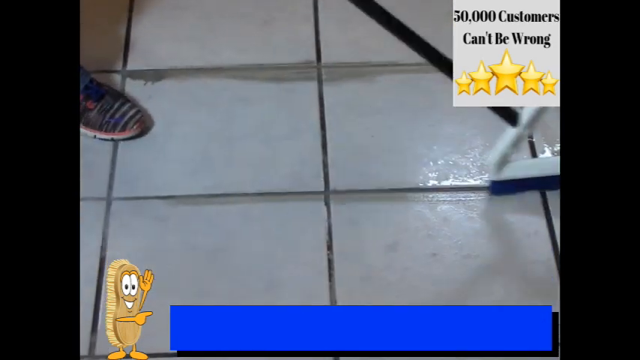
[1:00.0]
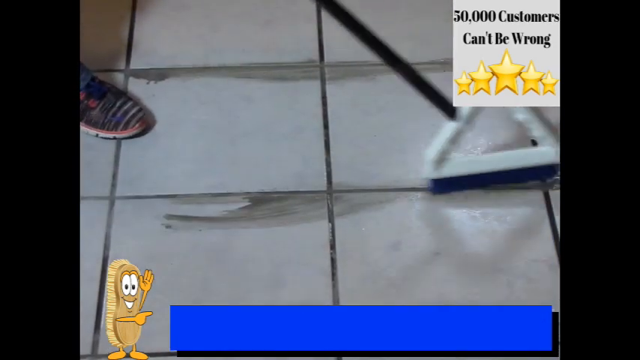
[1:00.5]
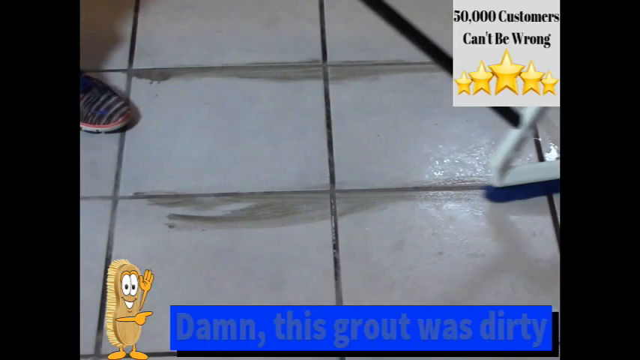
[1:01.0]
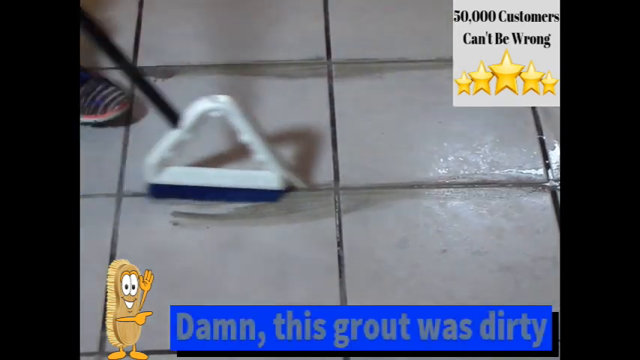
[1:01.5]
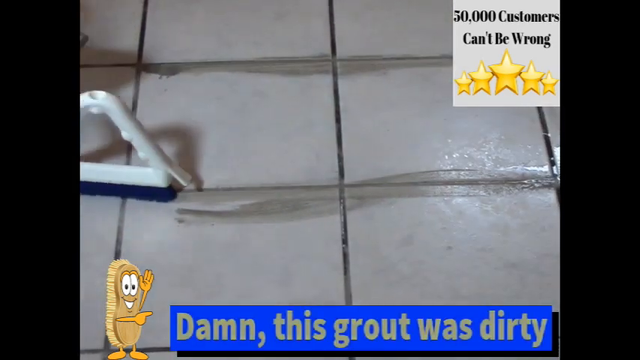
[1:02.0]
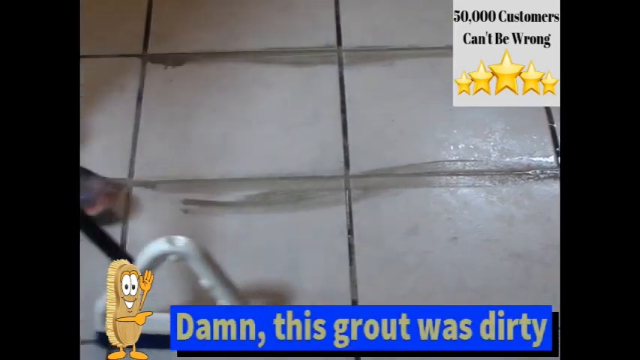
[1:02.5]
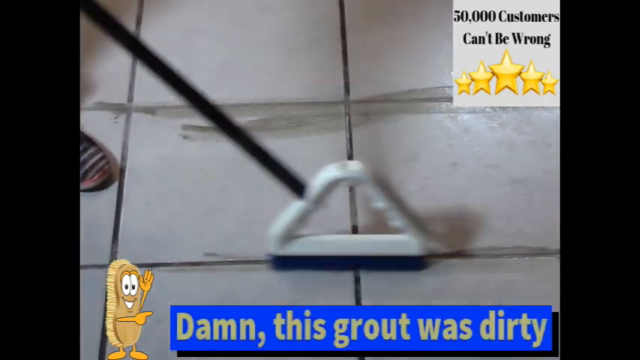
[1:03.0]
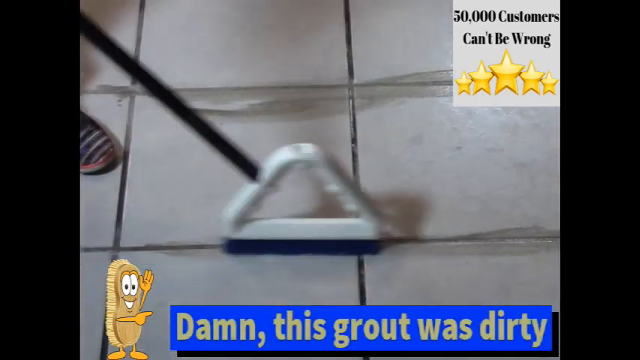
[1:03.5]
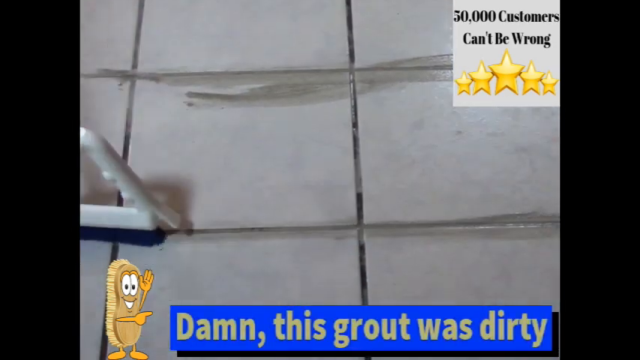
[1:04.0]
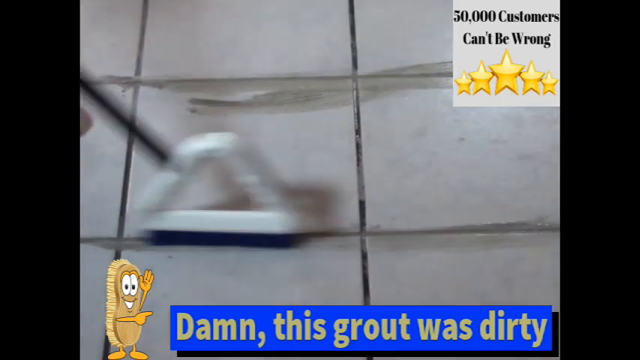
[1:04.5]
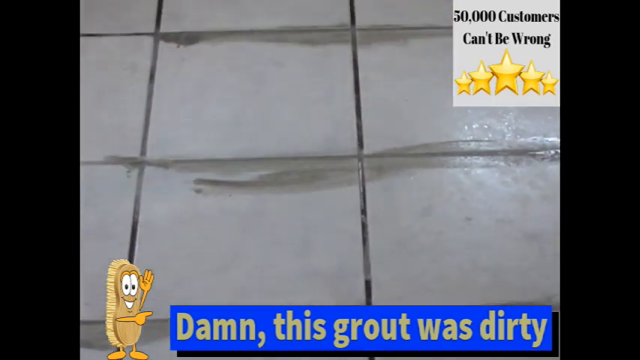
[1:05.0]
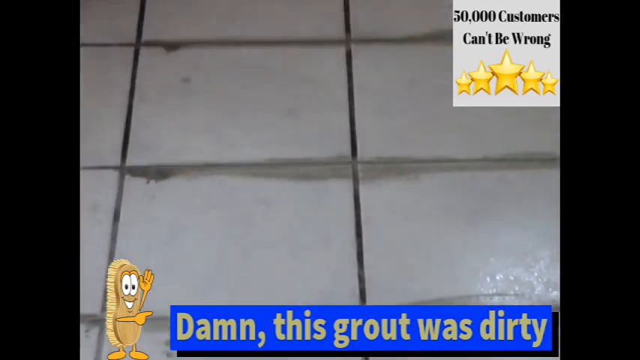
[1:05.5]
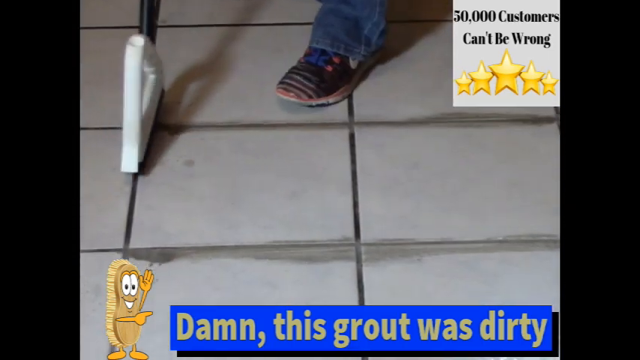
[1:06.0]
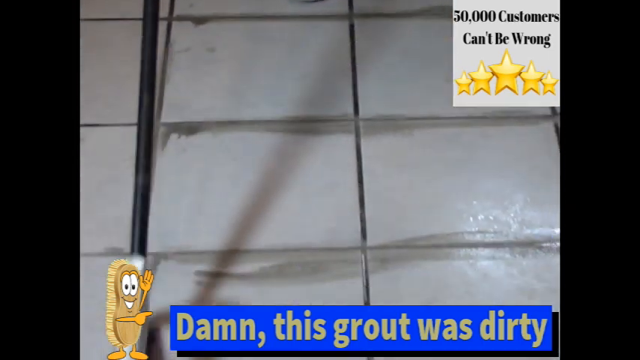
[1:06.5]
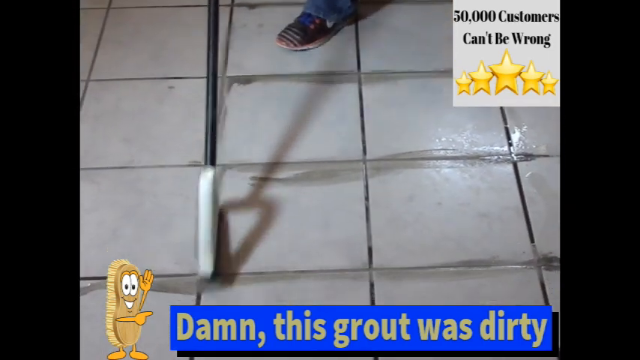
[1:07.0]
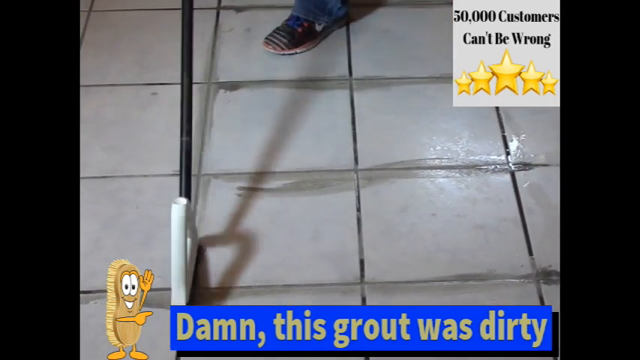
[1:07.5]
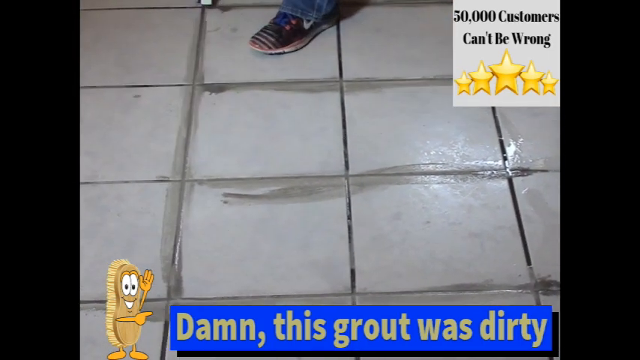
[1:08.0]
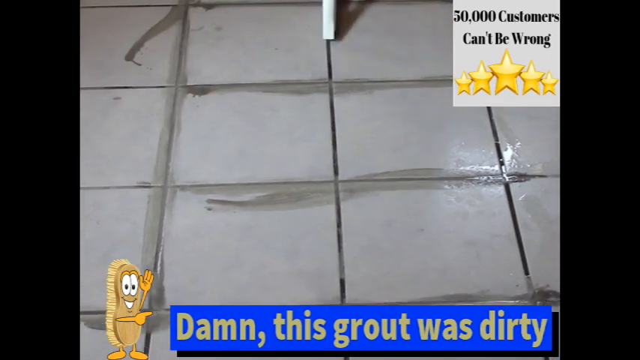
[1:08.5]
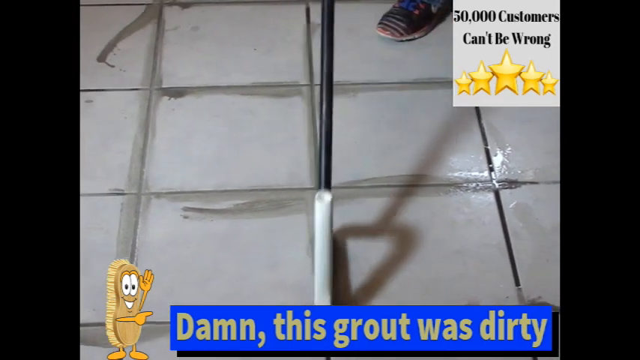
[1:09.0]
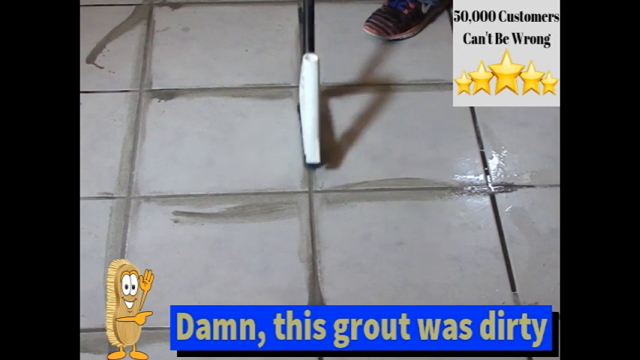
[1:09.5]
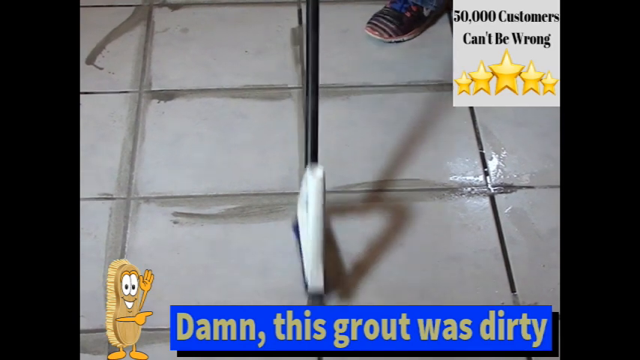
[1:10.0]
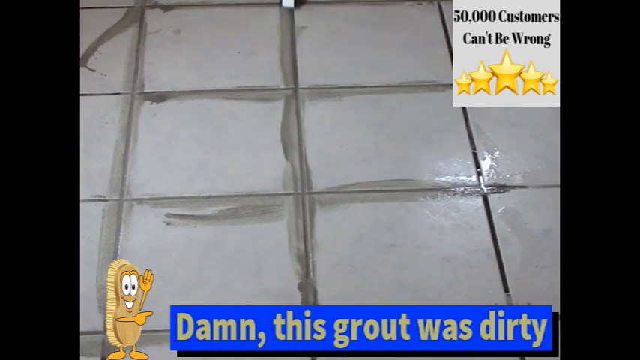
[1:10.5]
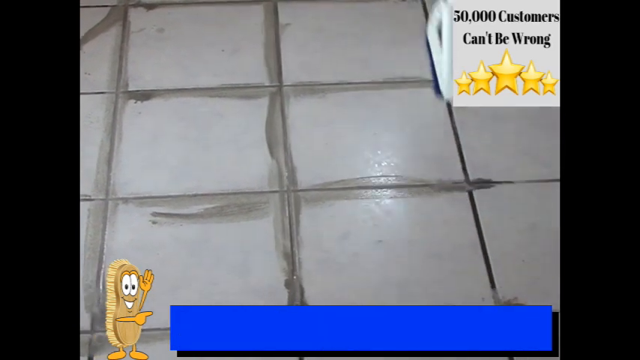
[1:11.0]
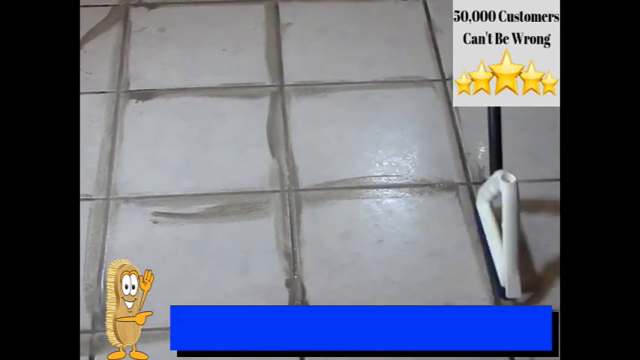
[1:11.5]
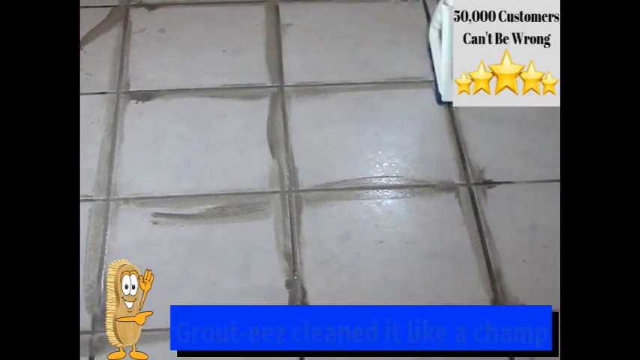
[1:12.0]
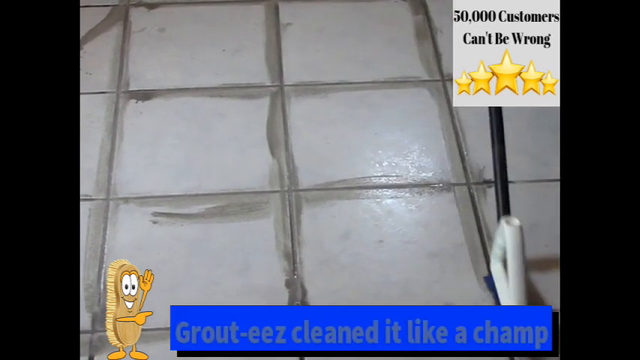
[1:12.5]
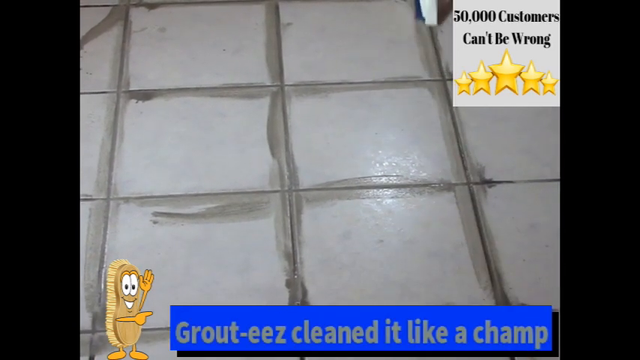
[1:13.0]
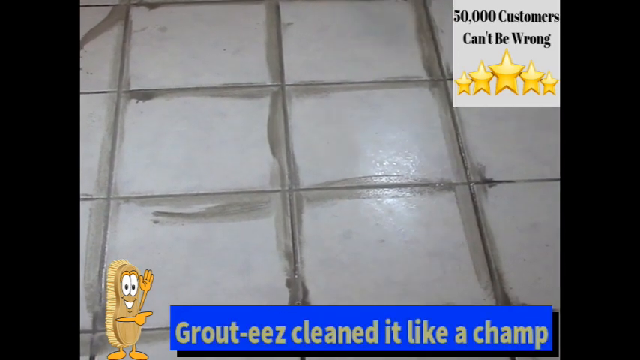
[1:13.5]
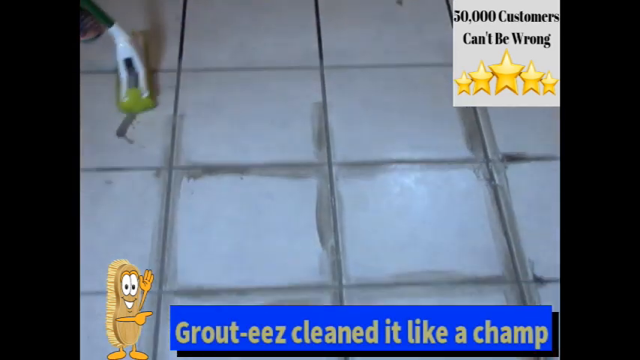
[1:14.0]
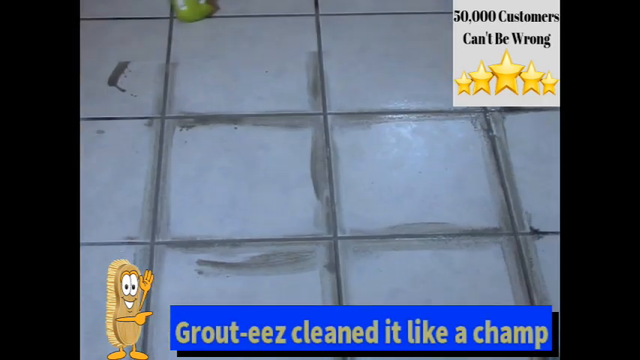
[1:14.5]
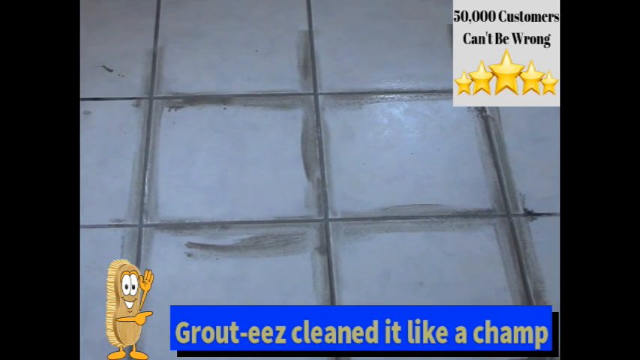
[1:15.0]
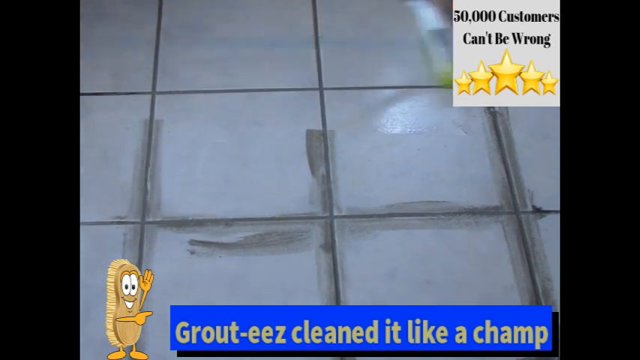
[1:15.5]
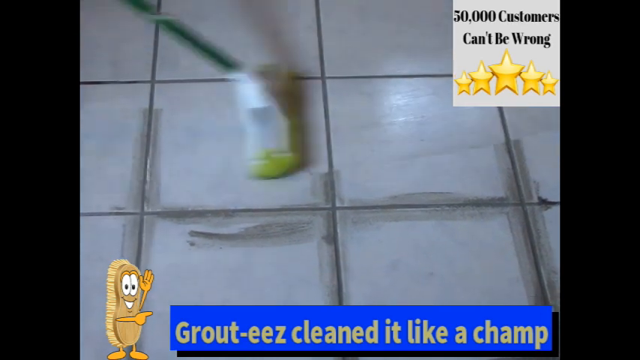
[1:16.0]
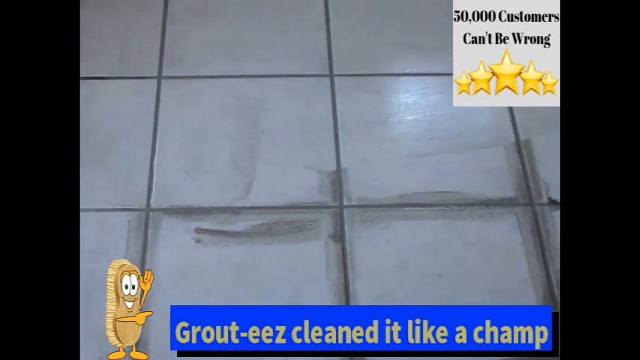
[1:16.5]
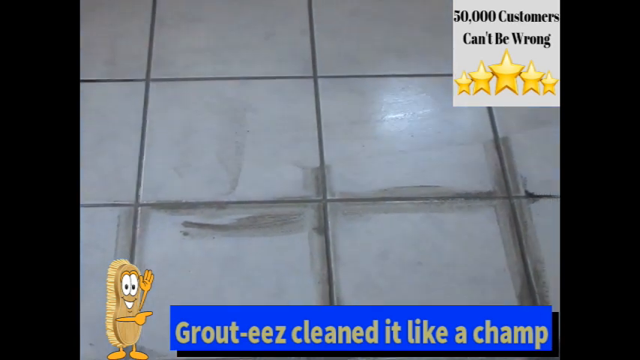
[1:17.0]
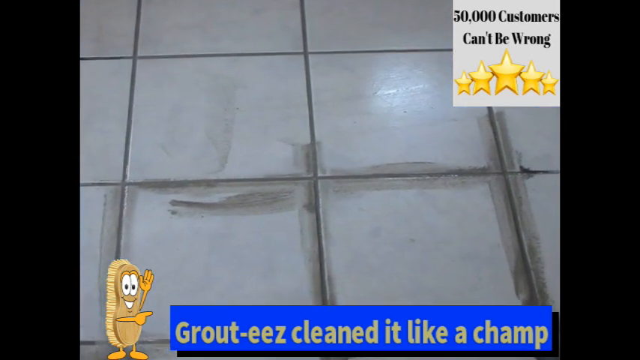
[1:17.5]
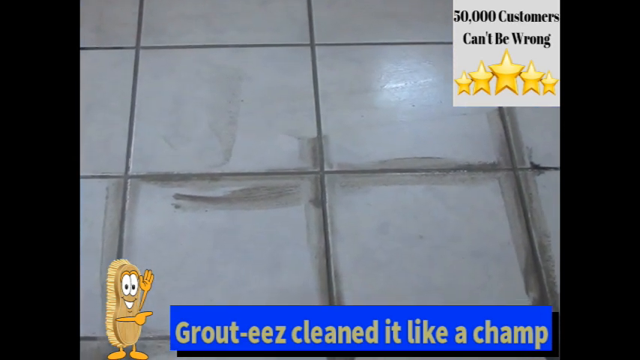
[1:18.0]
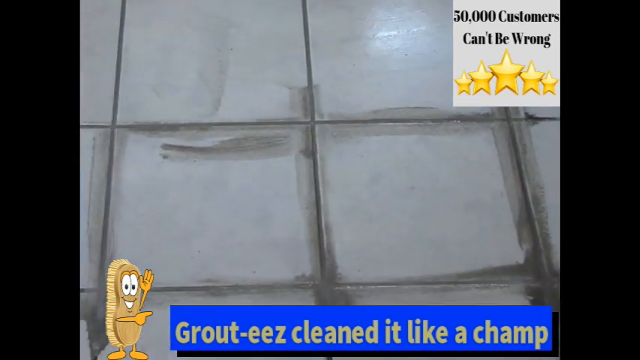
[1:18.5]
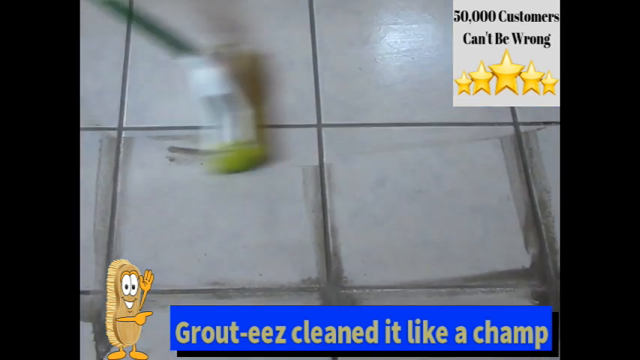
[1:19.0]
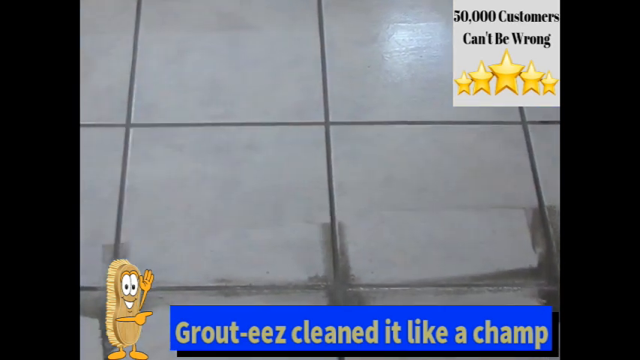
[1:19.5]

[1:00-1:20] A black line is on the left-hand side. In the middle is the gray tile with black grout. A white box at the top right has black lettering that says "50,000 customers can't be wrong," with five stars in the center; the middle star is the largest and they get smaller to the left and right. A person holds a black handle with a white triangle attached and a blue brush. A blue box at the bottom says in white lettering "damn, this grout was dirty." On the left side is a brown brush with brown bristles, yellow hands, yellow feet, white black-dotted eyes and a smile with teeth. Her pink and white running shoes and blue jeans are just visible. She rubs the tile, which leaves a black smear on the floor, and she uses an orange mop to clean up the residue left on the tile.